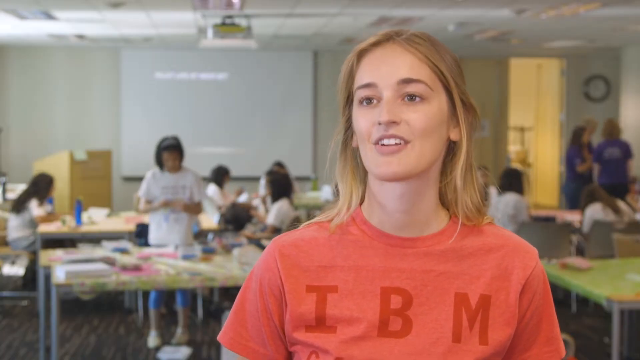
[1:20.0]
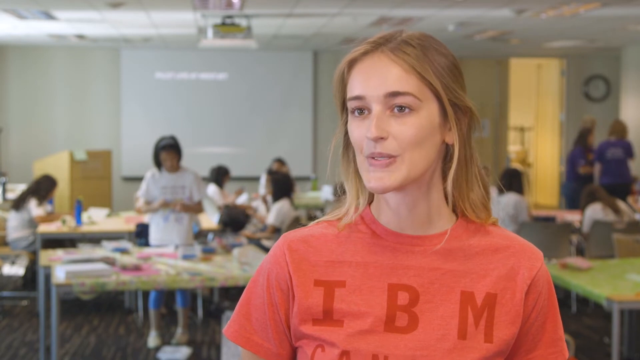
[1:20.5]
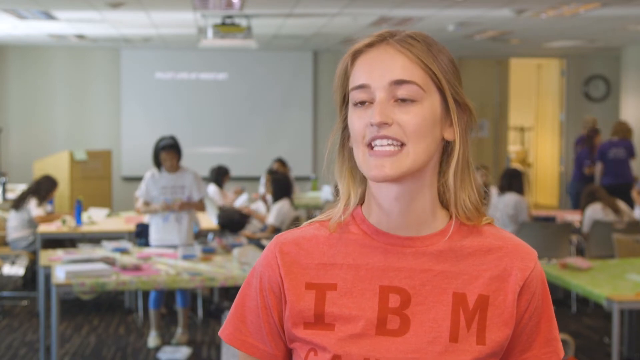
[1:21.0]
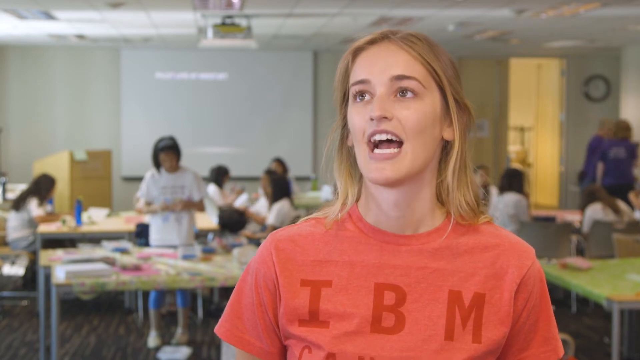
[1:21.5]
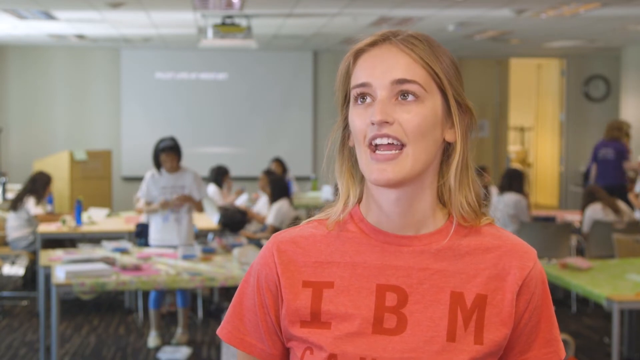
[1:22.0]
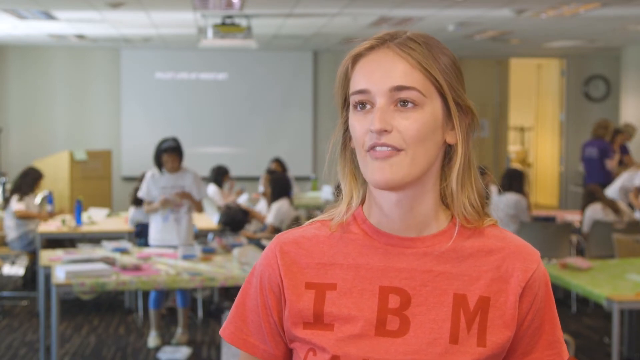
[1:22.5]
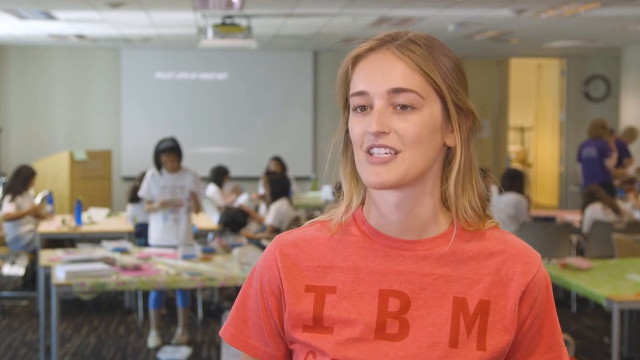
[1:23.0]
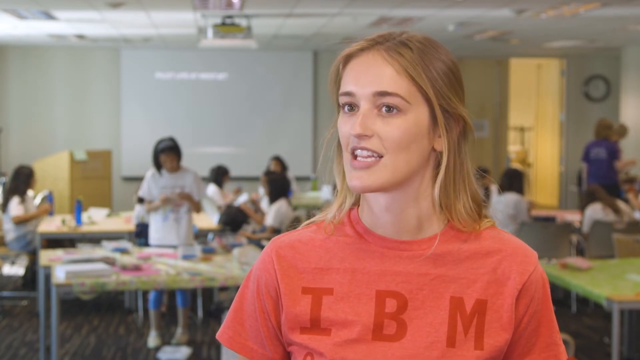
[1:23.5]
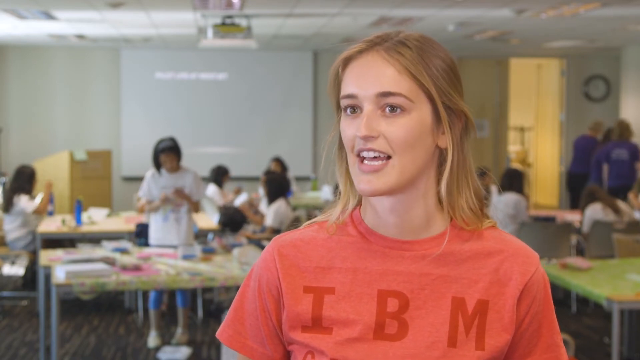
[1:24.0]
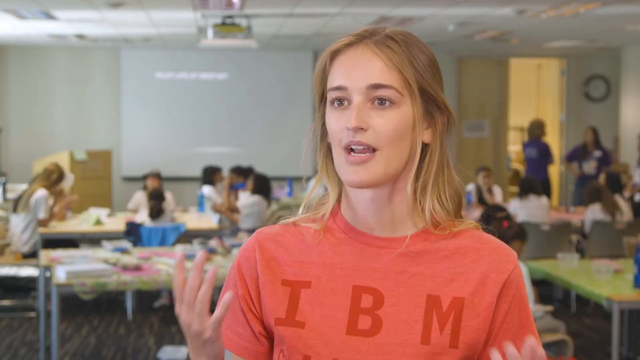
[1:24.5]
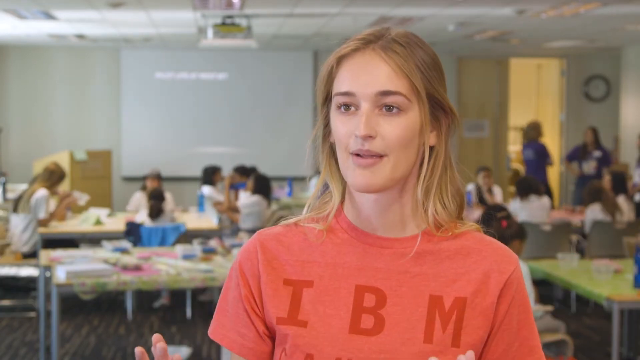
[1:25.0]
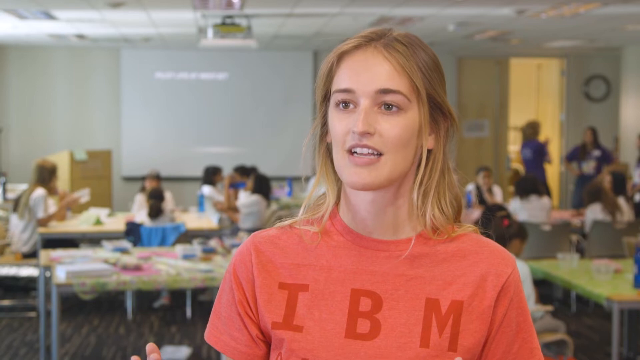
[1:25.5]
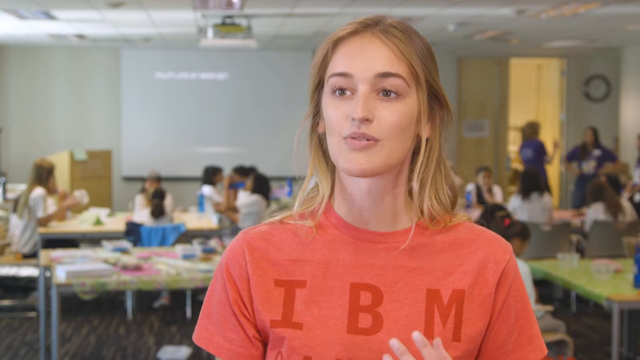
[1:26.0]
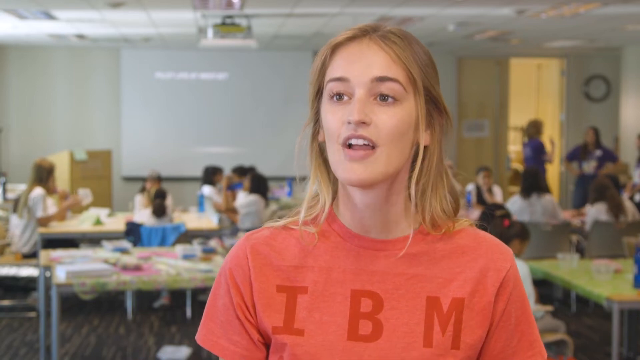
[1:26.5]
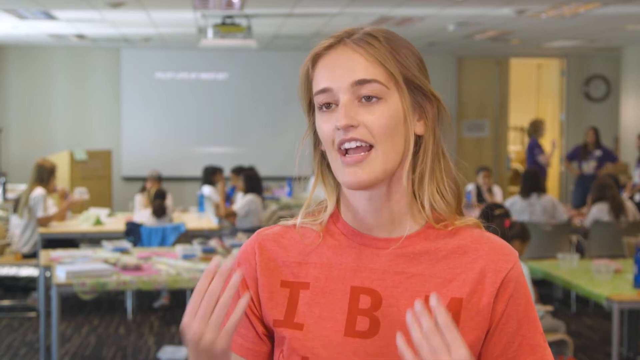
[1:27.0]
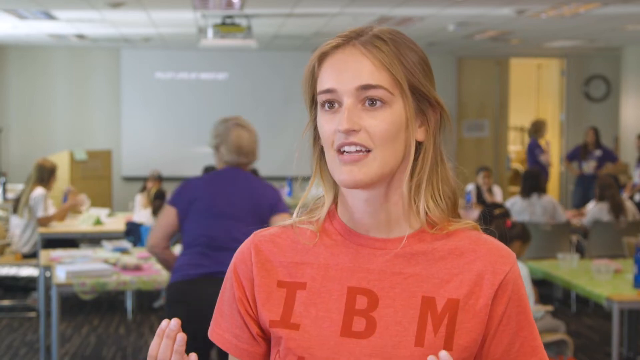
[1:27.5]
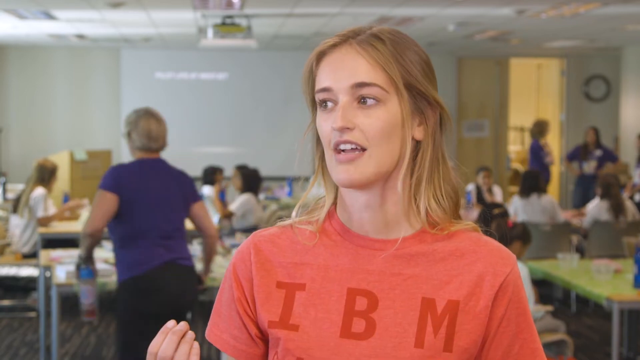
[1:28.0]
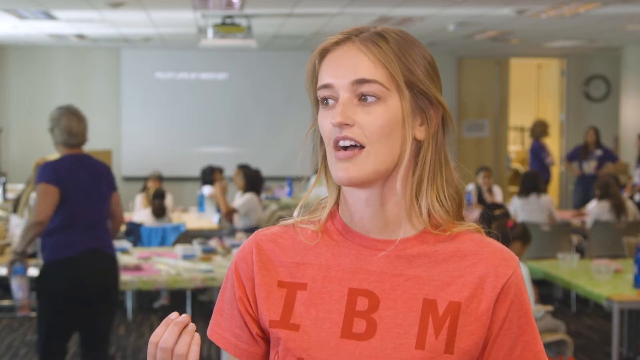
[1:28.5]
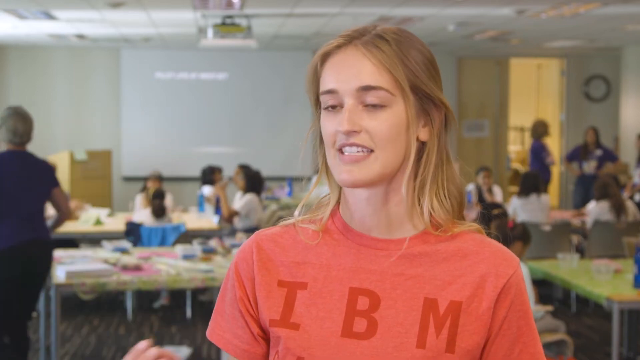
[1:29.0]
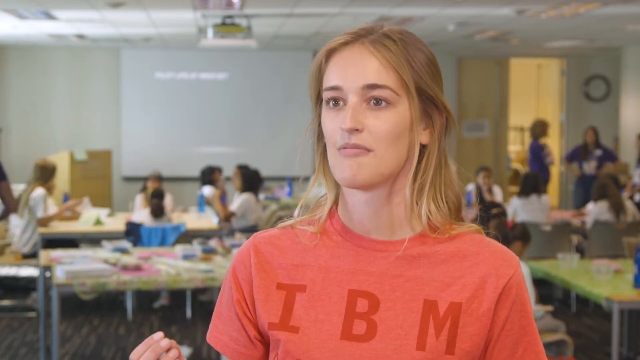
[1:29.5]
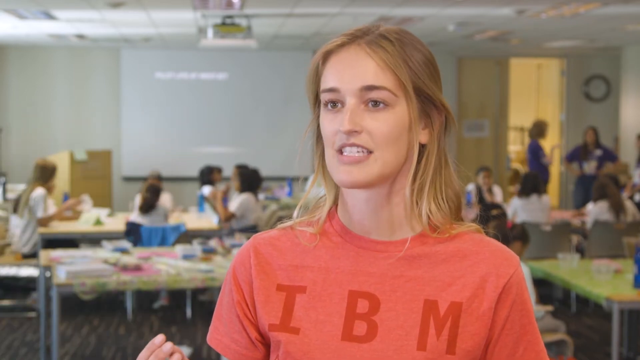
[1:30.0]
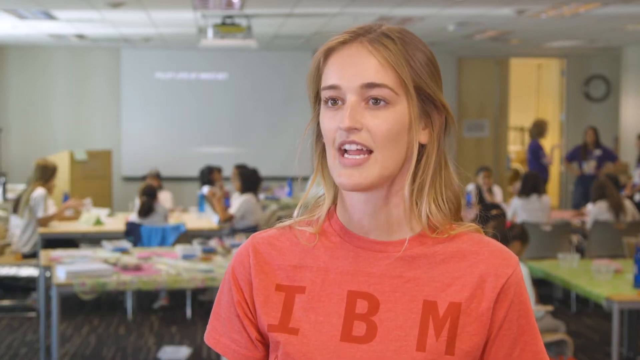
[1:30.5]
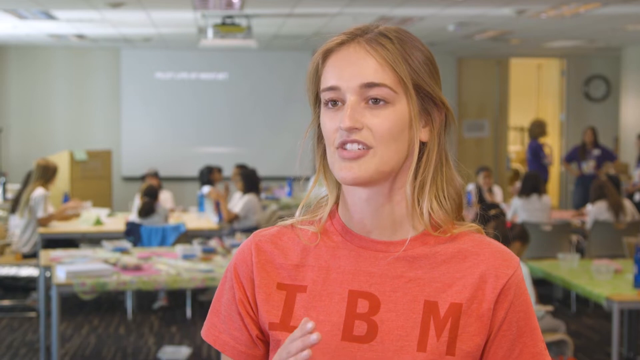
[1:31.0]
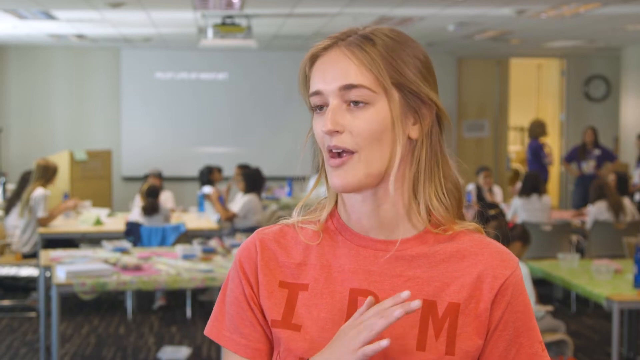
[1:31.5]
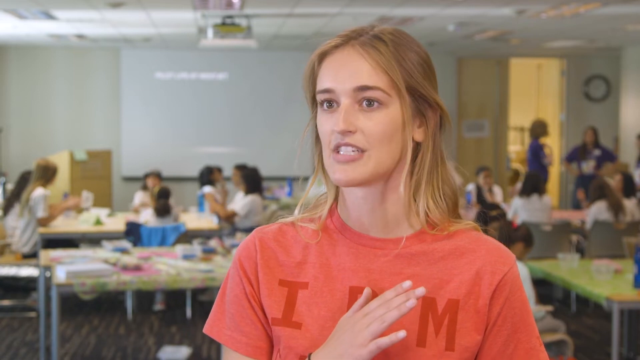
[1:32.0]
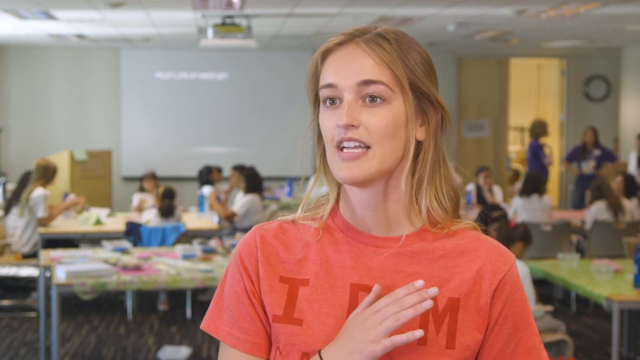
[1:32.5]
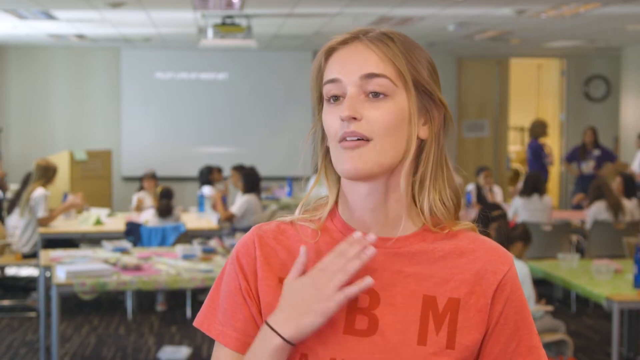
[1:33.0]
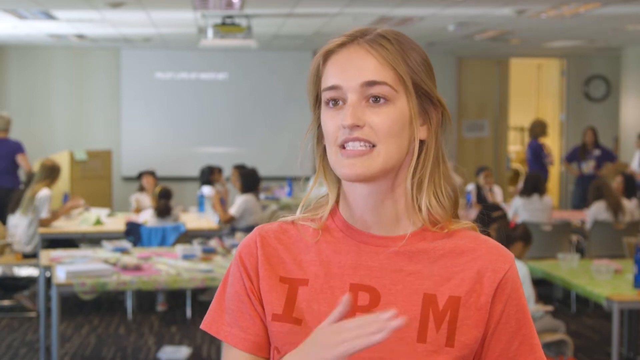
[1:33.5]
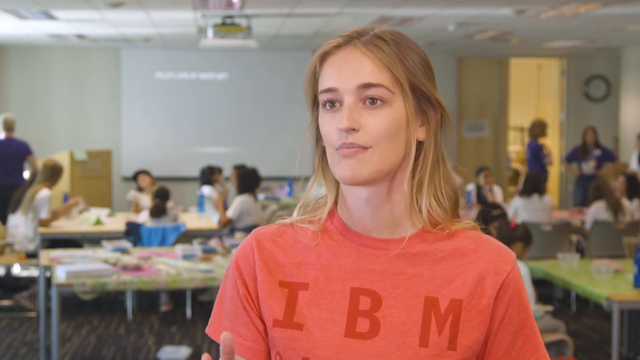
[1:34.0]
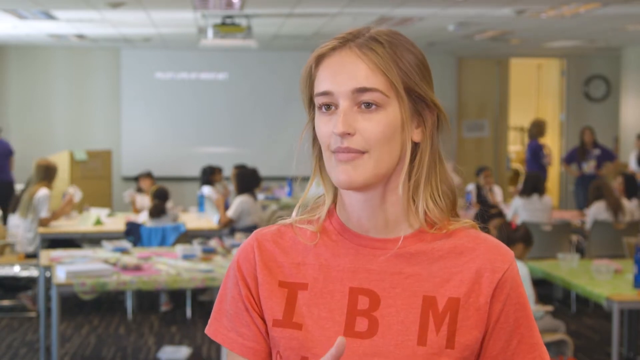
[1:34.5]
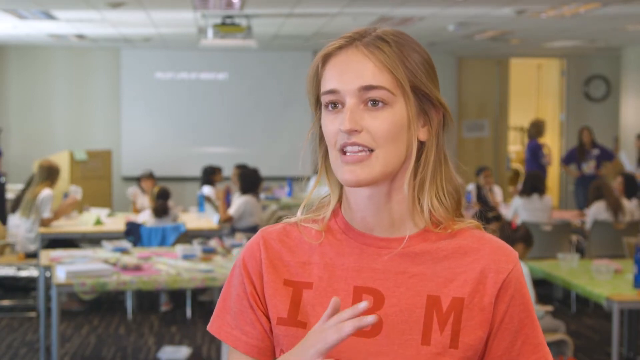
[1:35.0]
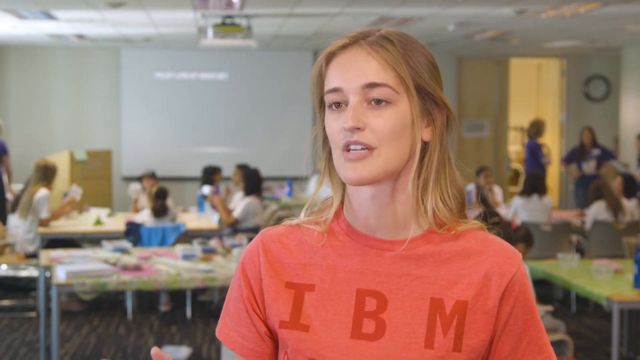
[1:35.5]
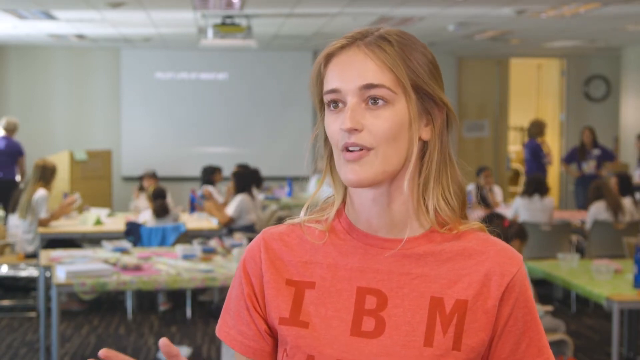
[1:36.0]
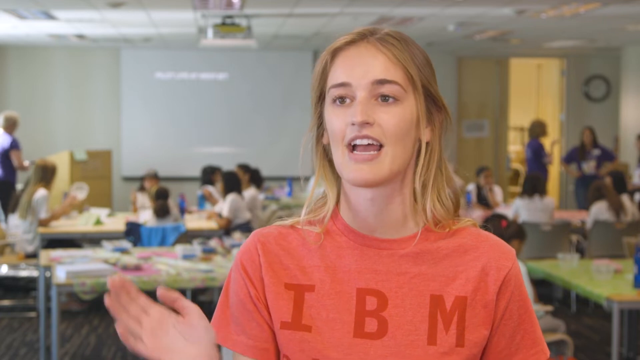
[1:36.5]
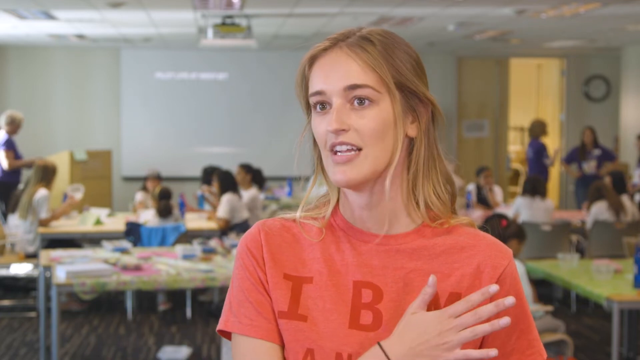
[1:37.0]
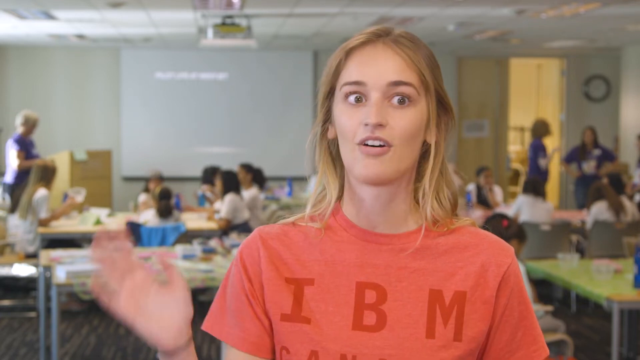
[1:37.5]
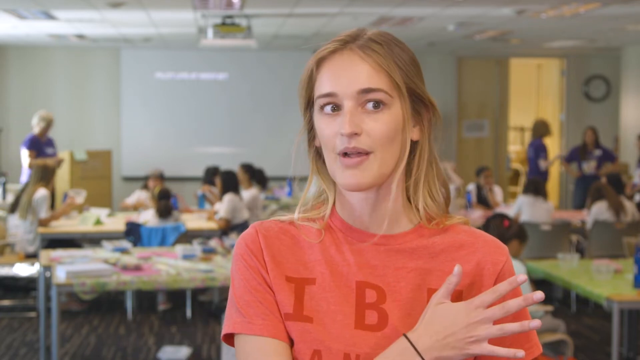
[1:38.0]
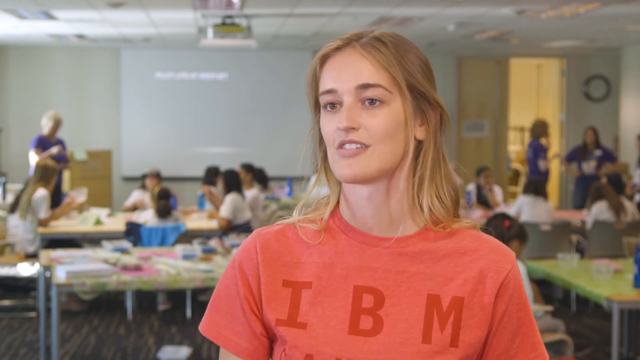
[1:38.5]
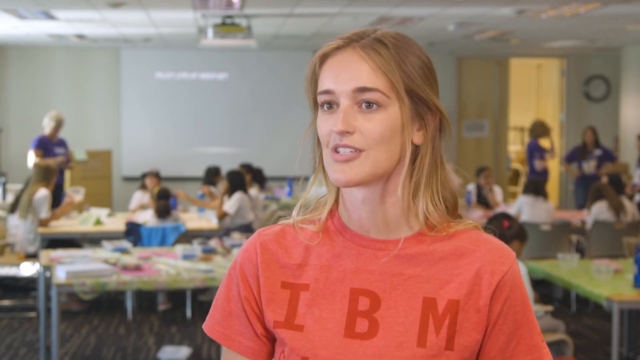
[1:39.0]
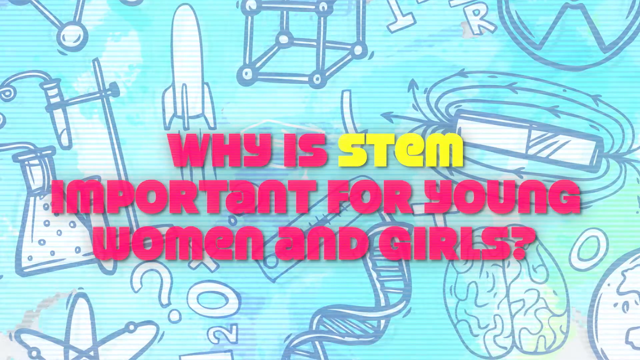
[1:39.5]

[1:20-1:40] In an elementary science lab or crafts lab with elementary children and several adult teachers or volunteers, a white woman in her twenties with long blonde hair and brown eyes speaks enthusiastically to the camera, smiling. The camera moves around capturing the activity in the lab. She gestures with emphasis, moving her hands back and forth and waving them. The video stops on a screen with a question about a challenge. The white girl in the salmon-colored IBM shirt then speaks, smiling and gesturing, her right hand going back and forth for emphasis. Text says "why is STEM important for young women and girls?" over the blue pencil drawing of rockets, test tubes, beakers, a DNA strand, a plus sign and arrows.